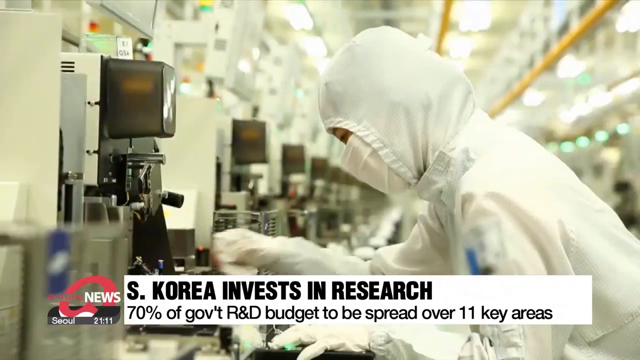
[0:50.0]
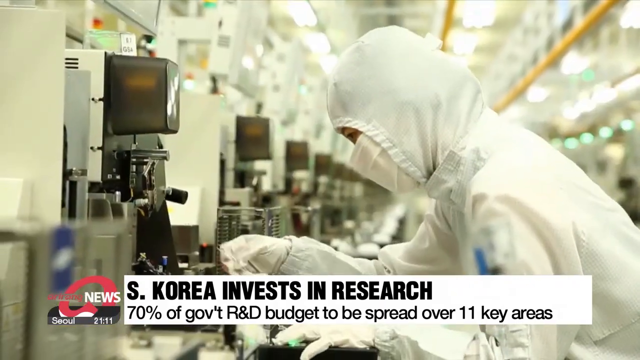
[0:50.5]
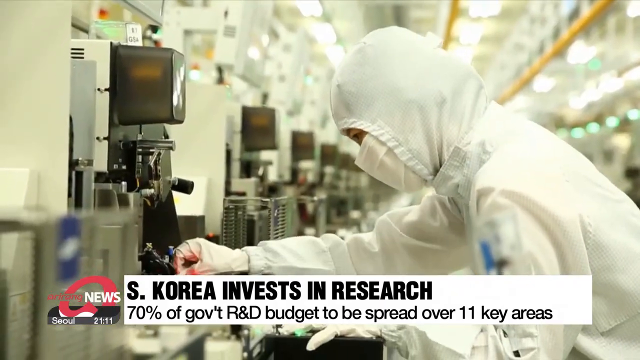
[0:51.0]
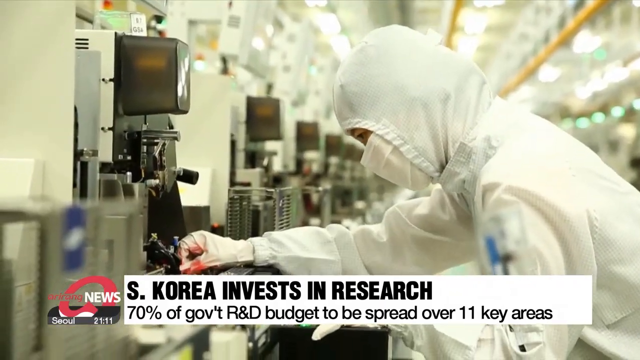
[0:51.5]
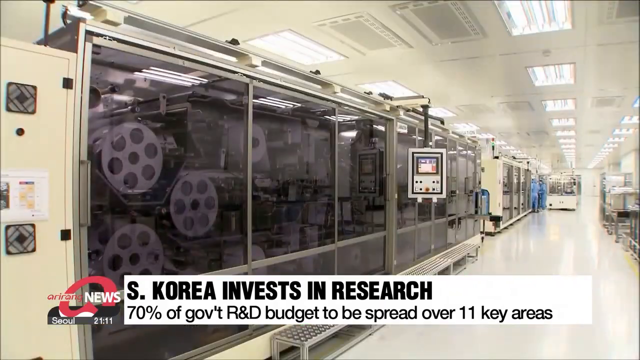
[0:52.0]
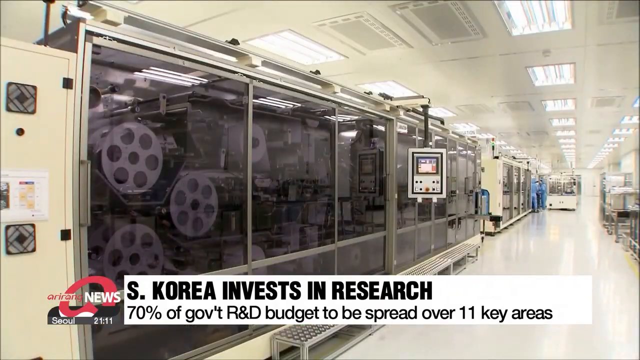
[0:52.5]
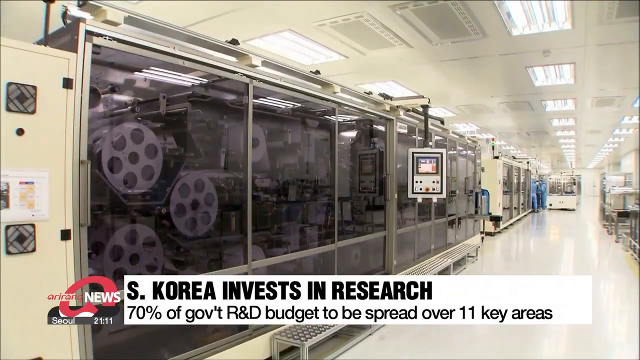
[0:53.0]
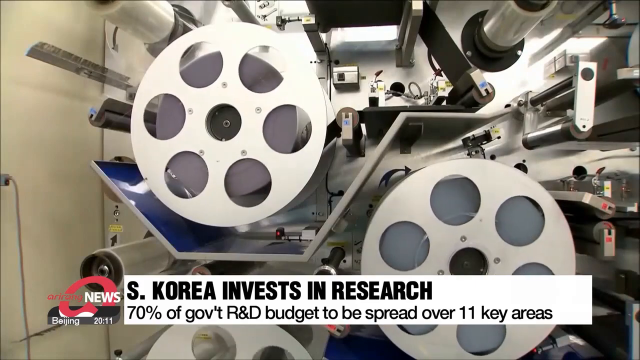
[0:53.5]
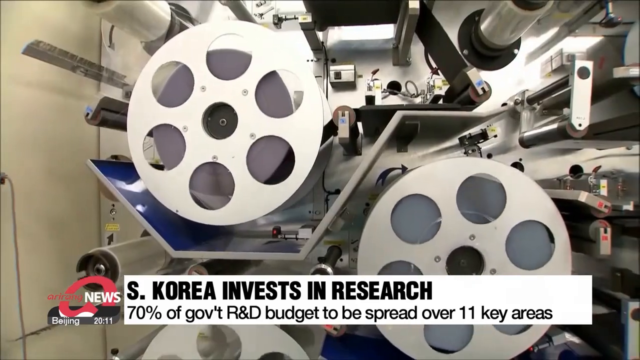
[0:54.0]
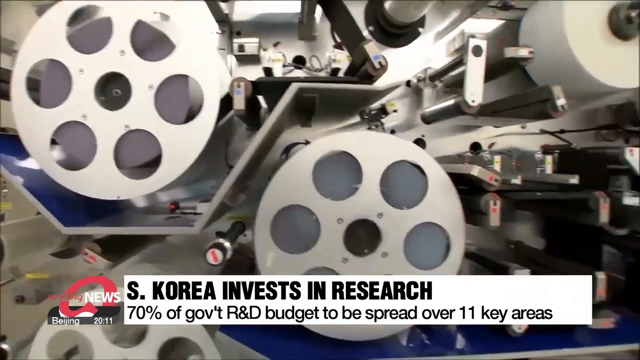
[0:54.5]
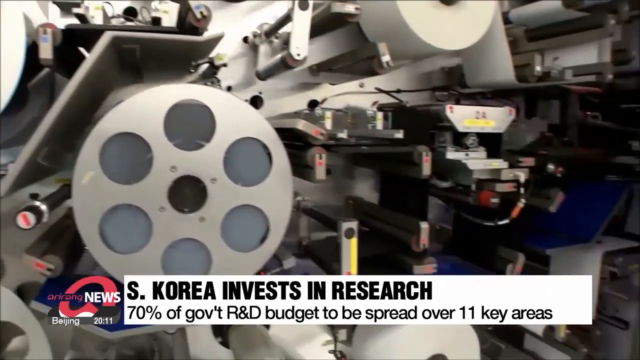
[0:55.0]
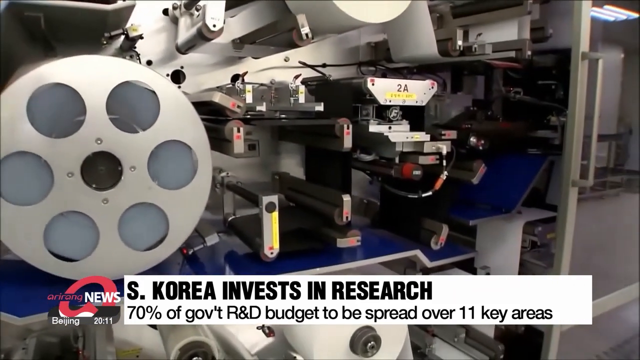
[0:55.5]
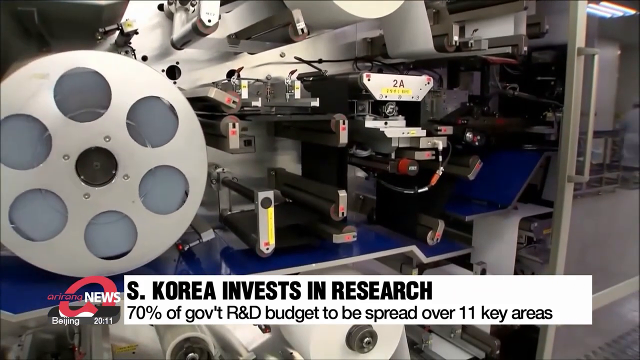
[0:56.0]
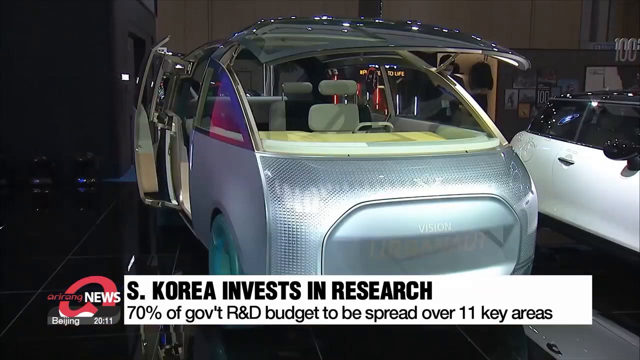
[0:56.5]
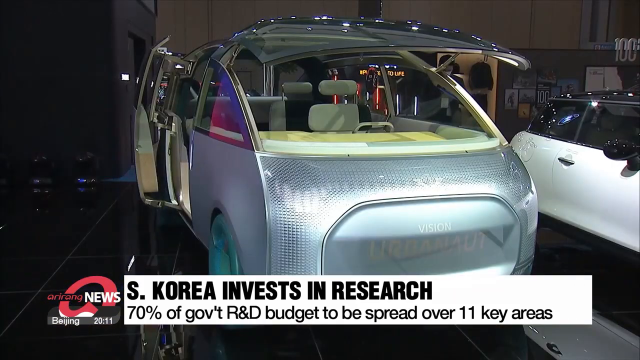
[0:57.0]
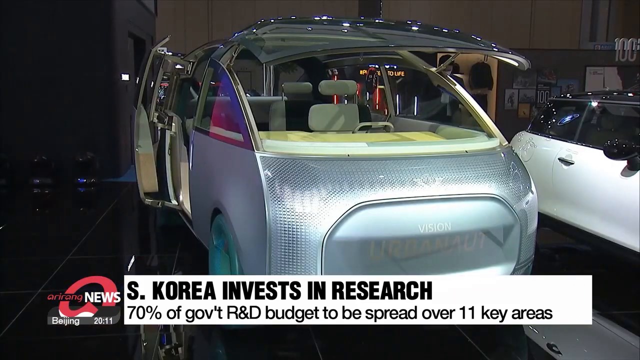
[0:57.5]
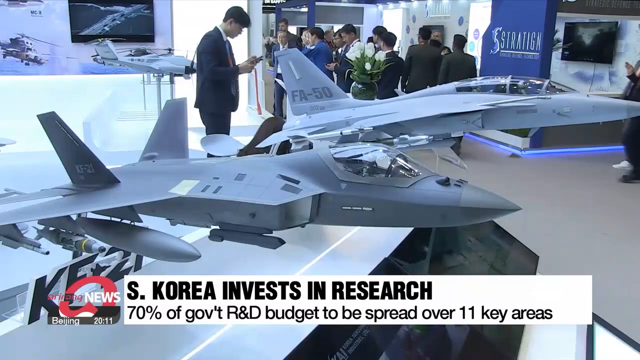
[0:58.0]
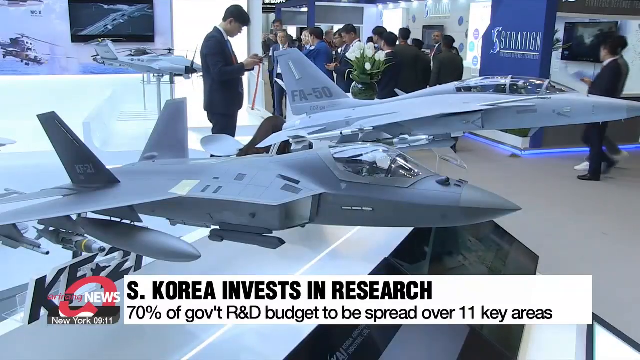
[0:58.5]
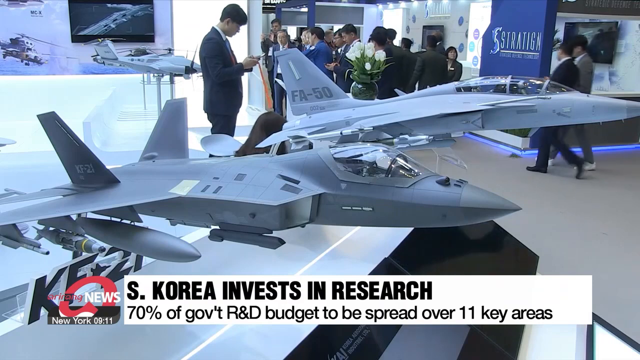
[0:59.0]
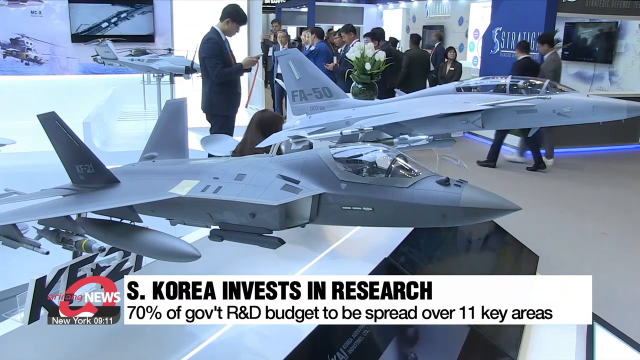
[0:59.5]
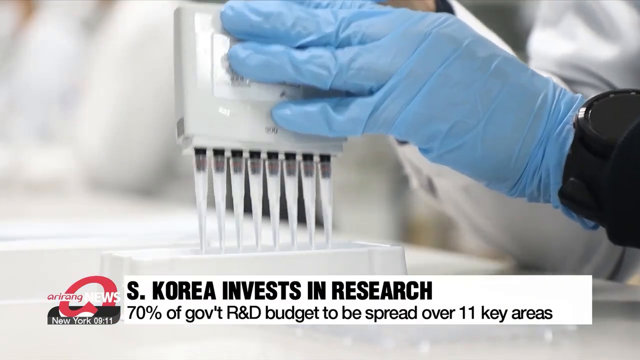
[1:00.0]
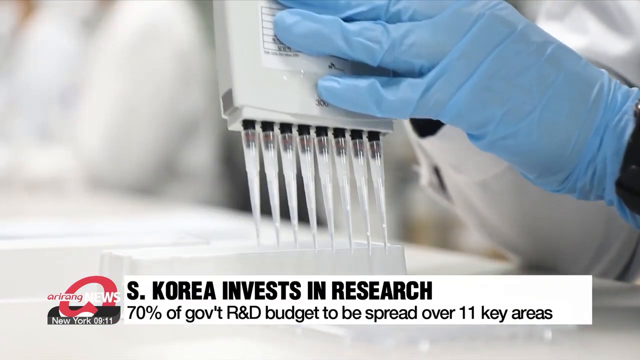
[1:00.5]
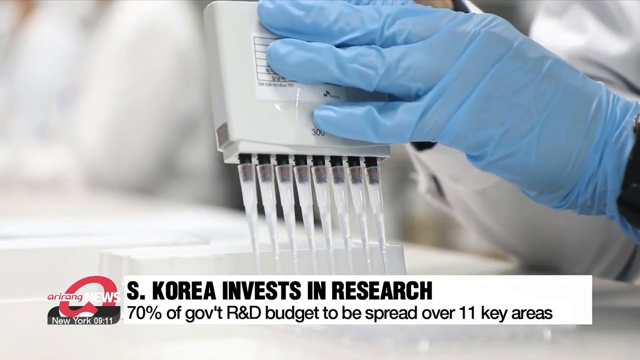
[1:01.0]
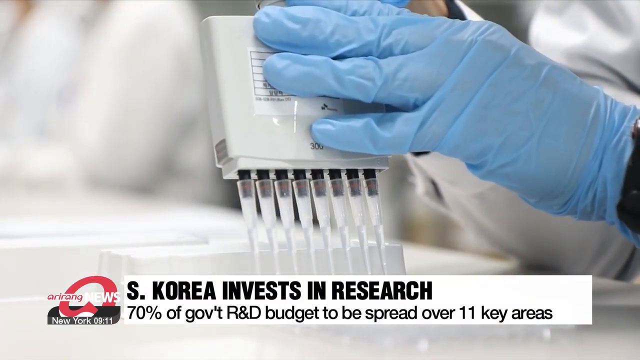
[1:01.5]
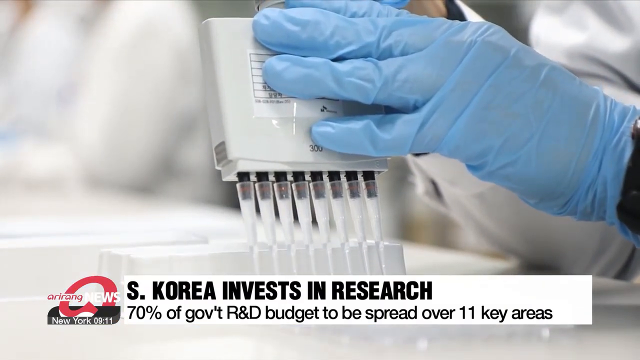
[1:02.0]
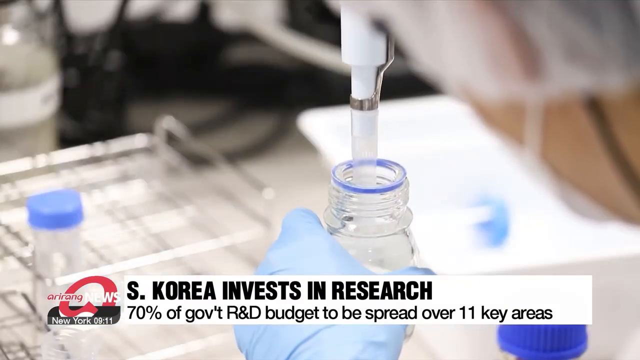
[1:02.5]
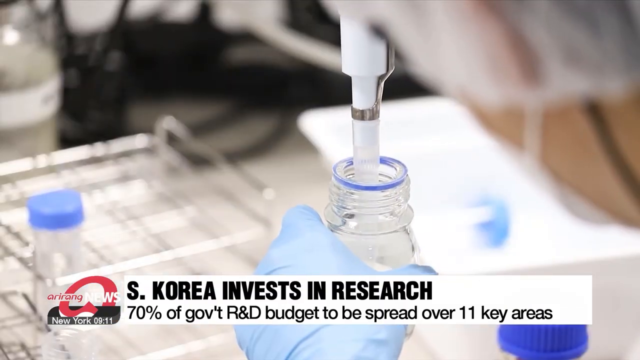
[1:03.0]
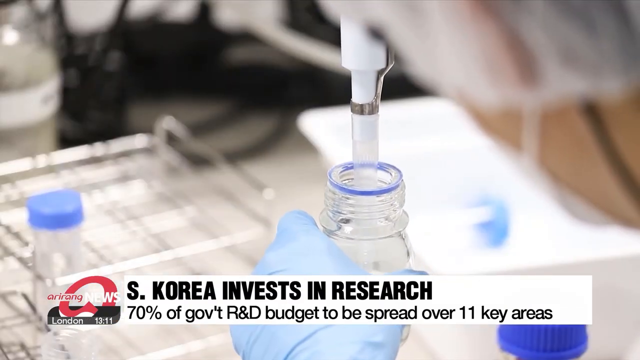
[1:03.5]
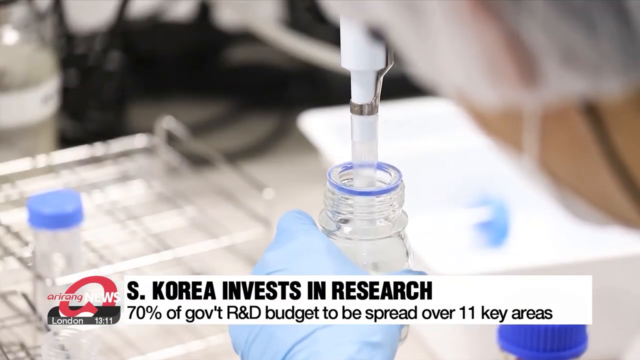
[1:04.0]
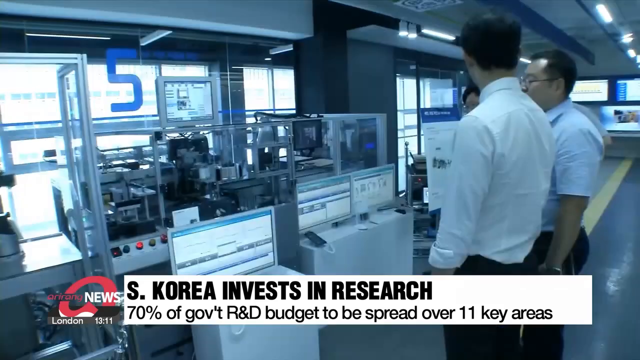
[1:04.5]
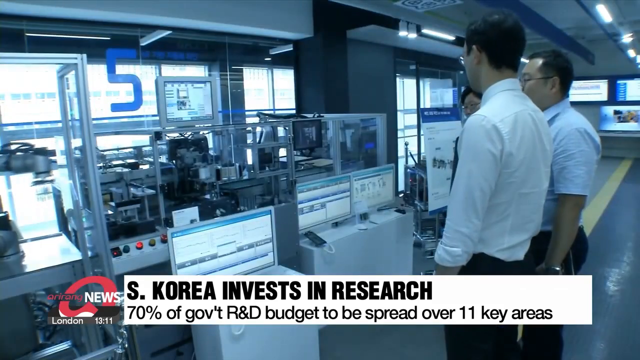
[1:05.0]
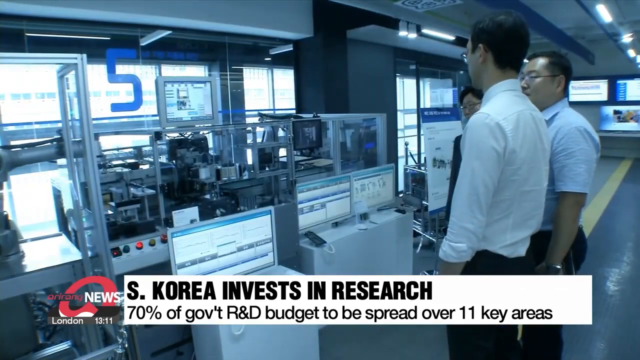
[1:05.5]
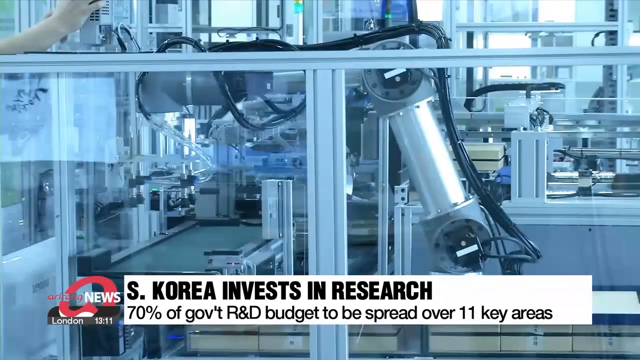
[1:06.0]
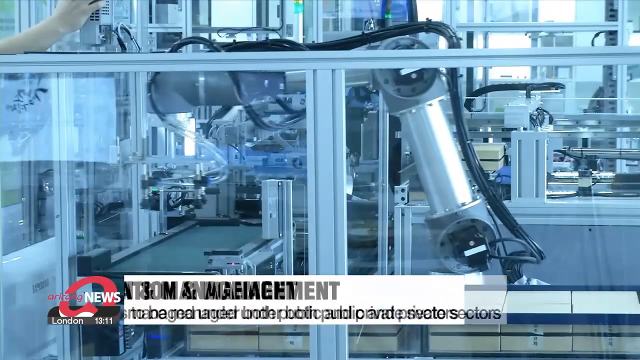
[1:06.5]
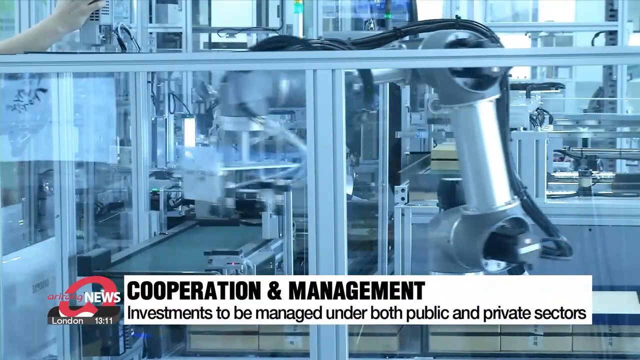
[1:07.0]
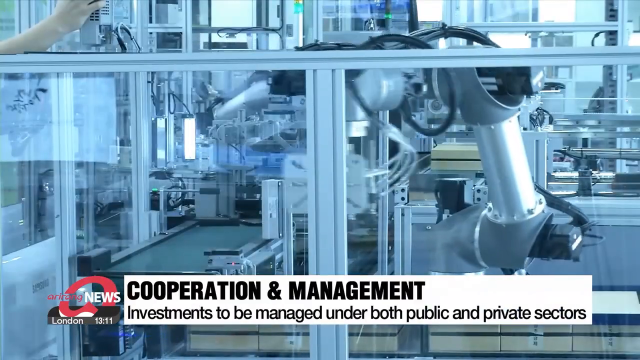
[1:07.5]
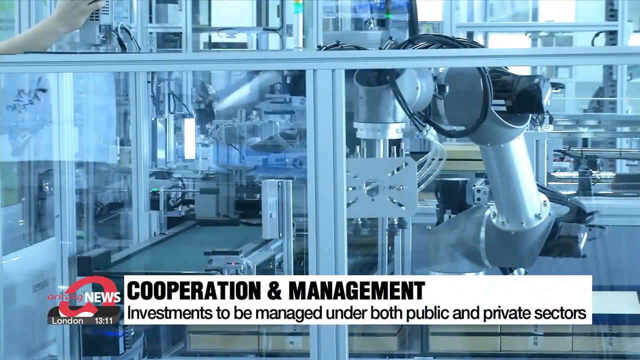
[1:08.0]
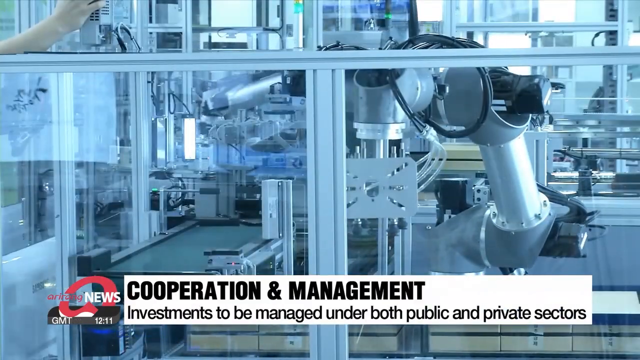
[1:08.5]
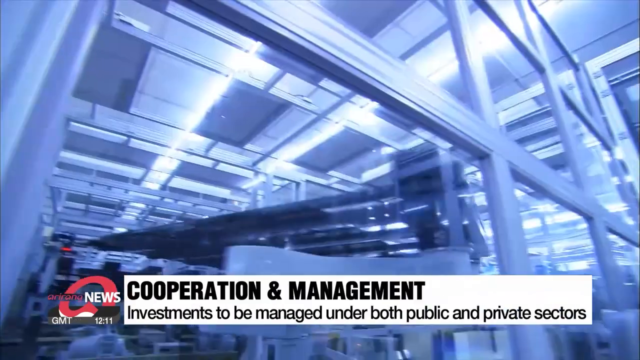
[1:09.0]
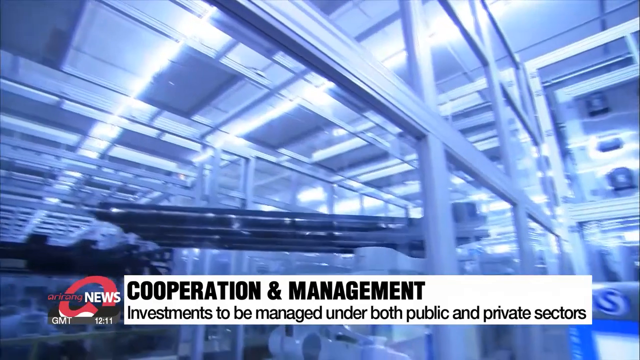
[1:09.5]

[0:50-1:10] A man works in what looks like a research lab, dressed all in white: a white coat, a white hood pulled over his head, a white mask and white gloves. He works at a small machine, possibly a microscope. Another shot in a lab that appears to be the same one, all white, shows big clear structures with windows through which complicated circular machinery with circles inside can be seen rotating. A very futuristic, odd-looking car appears with its top open. Then there are what look to be jet plane models, one labeled "FA-50" and the other "KF-21," in a room marked "Strat IGN." People in suits and business attire walk around. The video cuts back to the lab, where someone is taking samples, and then two people in a lab watch a robotic arm while having a conversation.